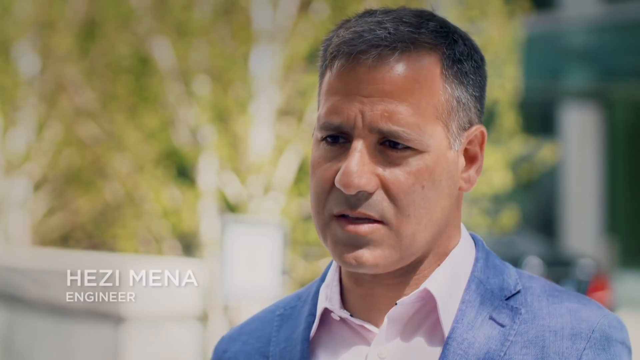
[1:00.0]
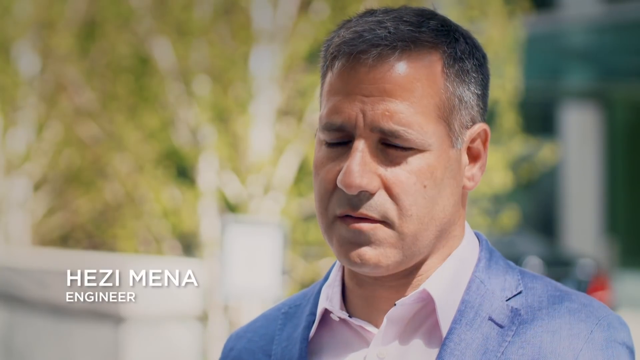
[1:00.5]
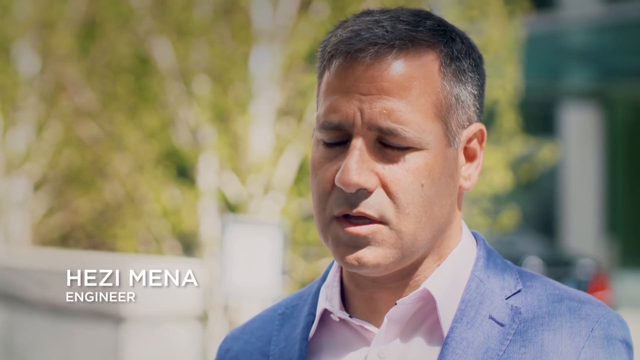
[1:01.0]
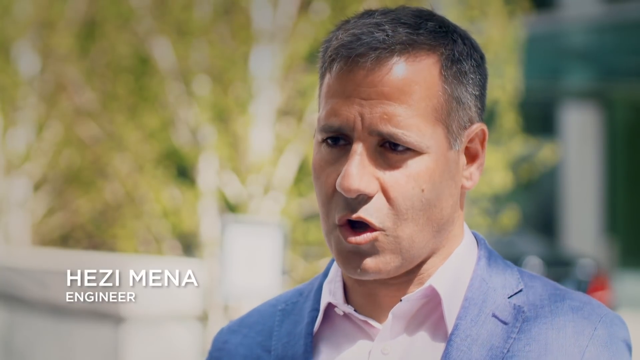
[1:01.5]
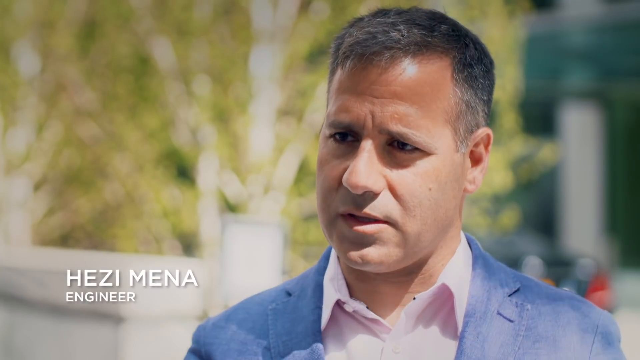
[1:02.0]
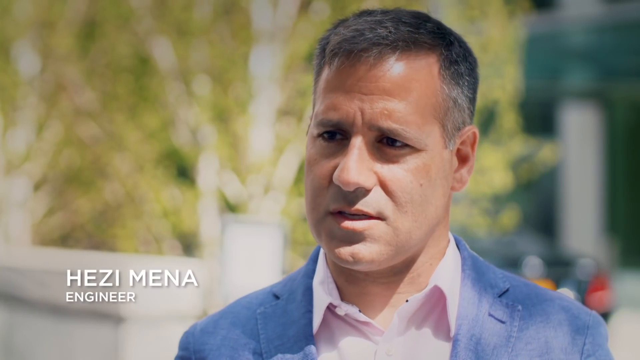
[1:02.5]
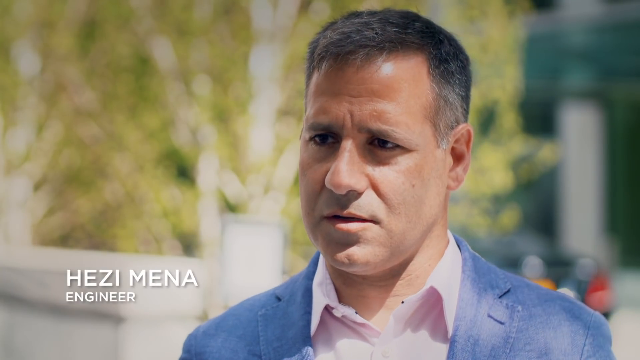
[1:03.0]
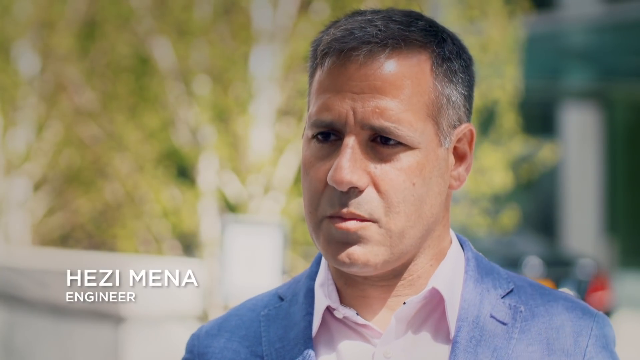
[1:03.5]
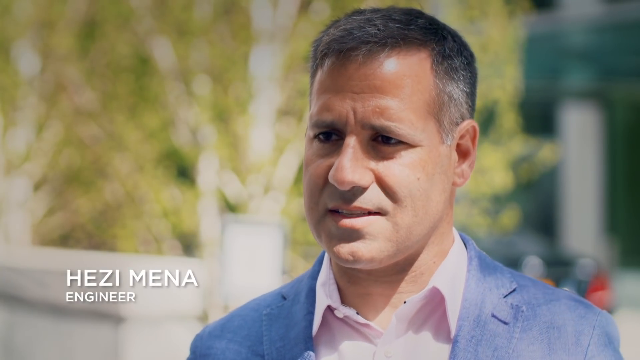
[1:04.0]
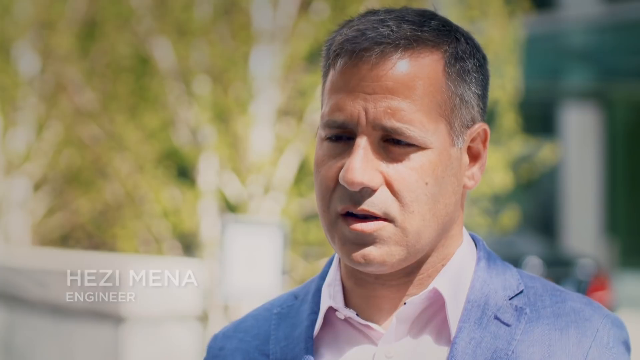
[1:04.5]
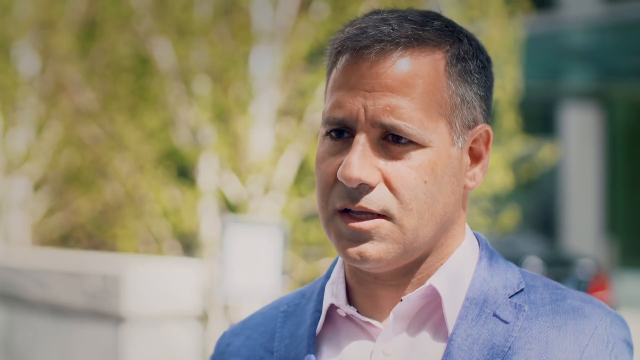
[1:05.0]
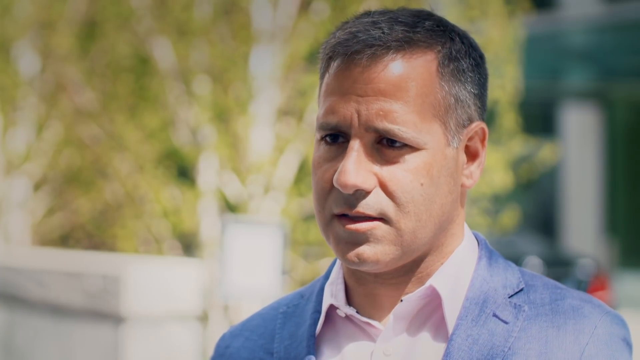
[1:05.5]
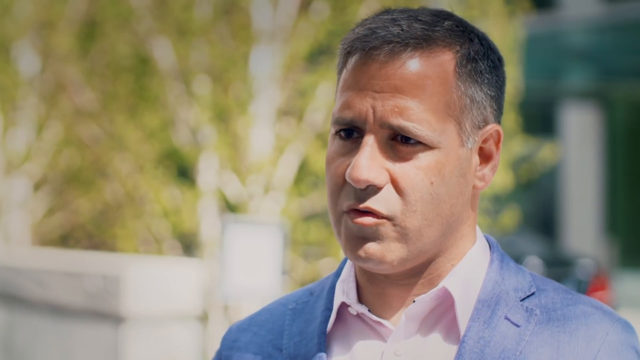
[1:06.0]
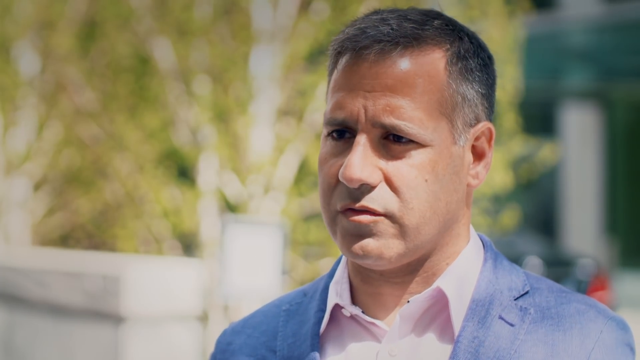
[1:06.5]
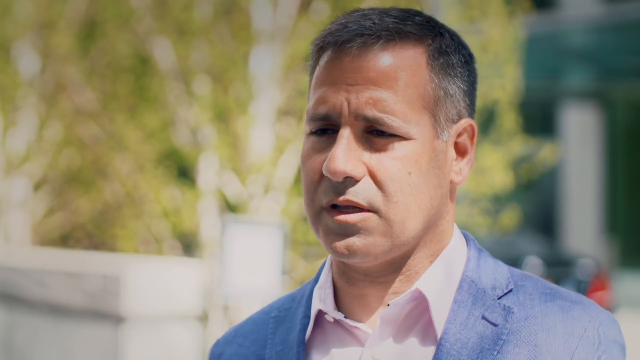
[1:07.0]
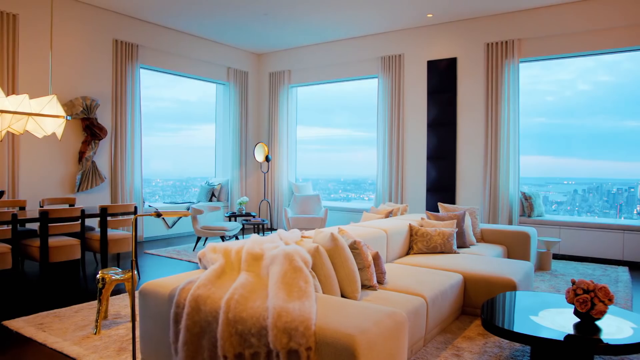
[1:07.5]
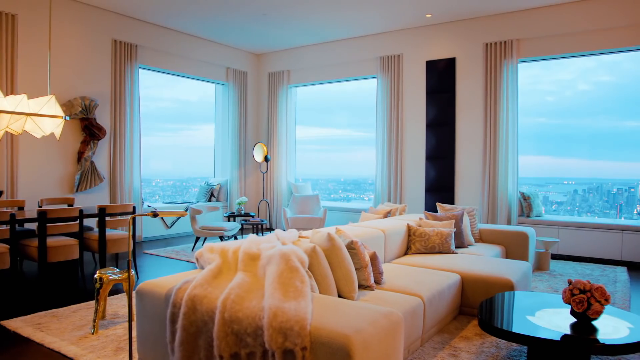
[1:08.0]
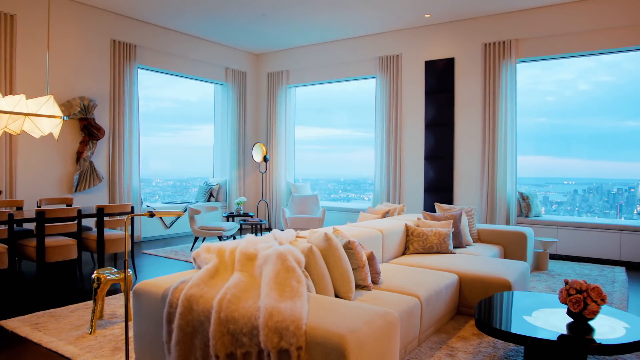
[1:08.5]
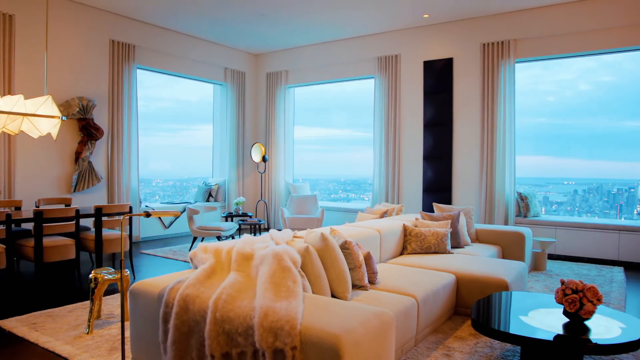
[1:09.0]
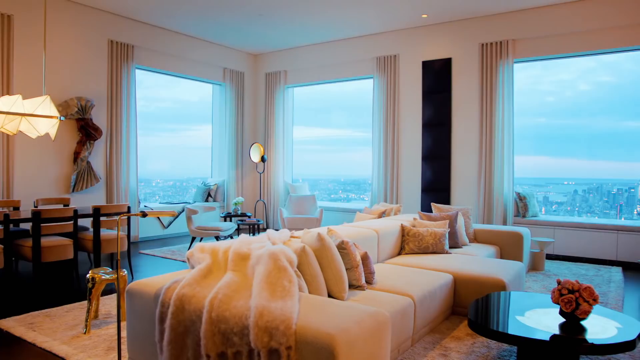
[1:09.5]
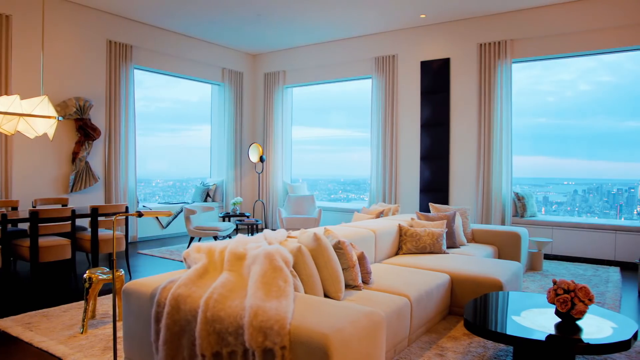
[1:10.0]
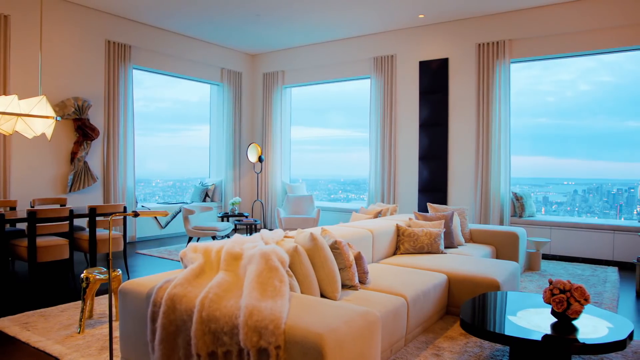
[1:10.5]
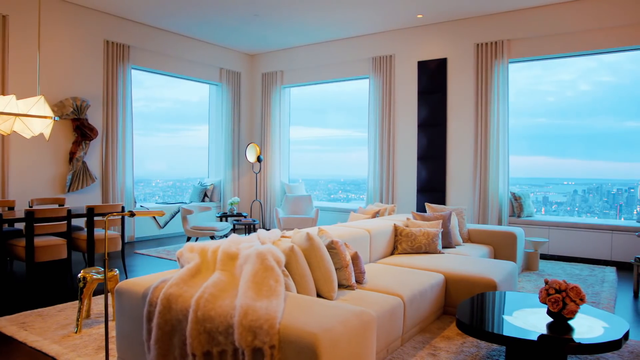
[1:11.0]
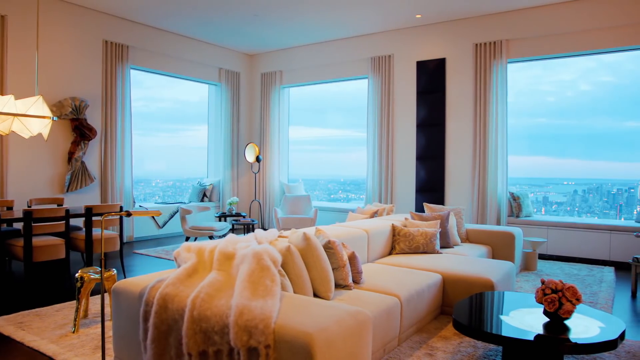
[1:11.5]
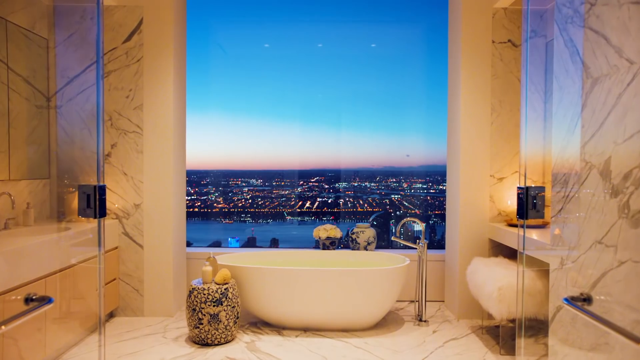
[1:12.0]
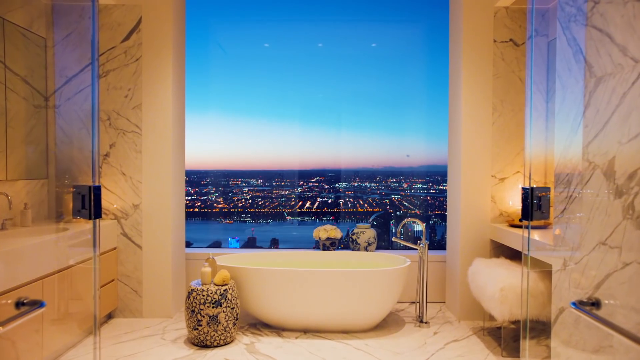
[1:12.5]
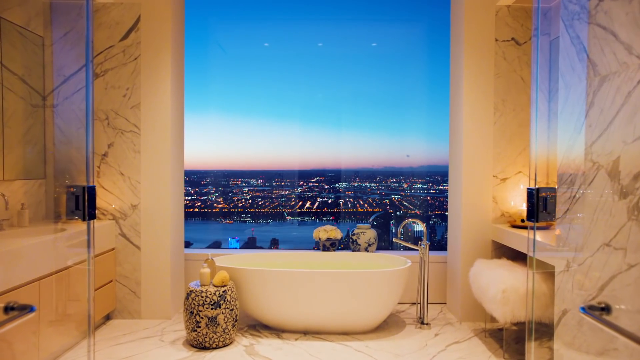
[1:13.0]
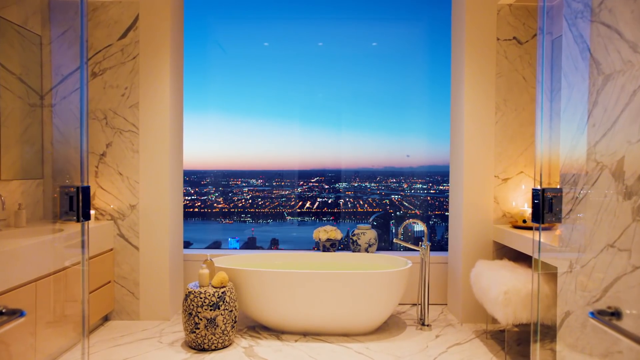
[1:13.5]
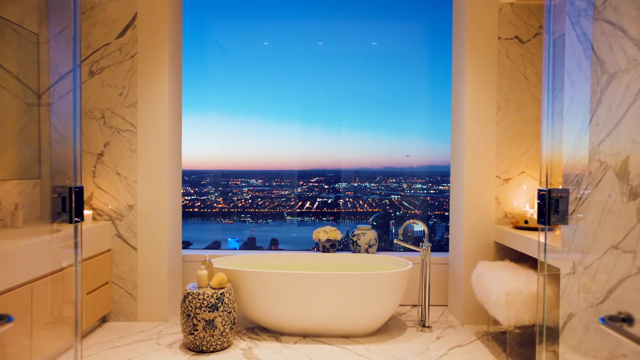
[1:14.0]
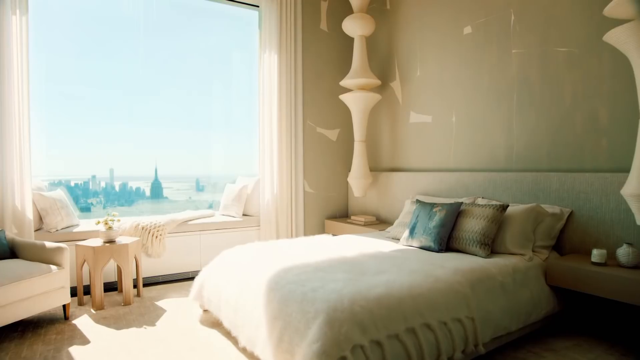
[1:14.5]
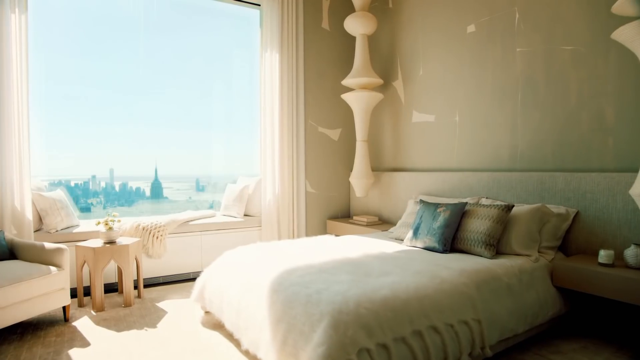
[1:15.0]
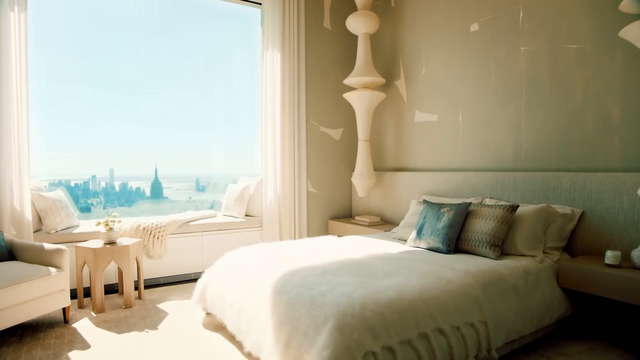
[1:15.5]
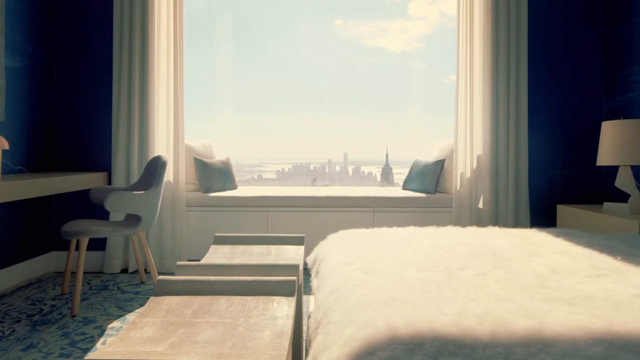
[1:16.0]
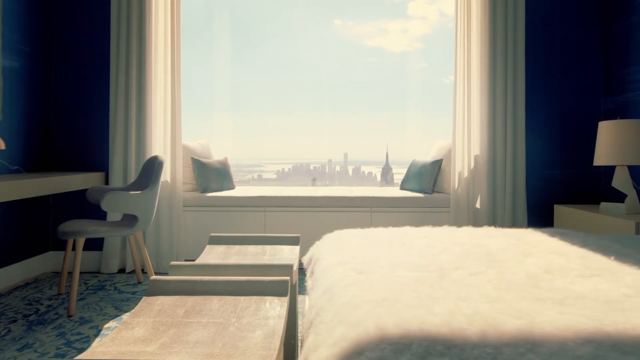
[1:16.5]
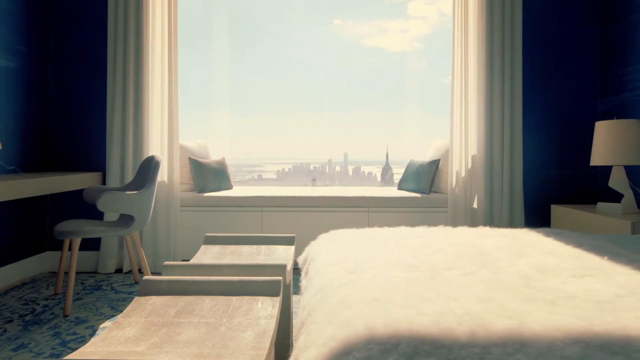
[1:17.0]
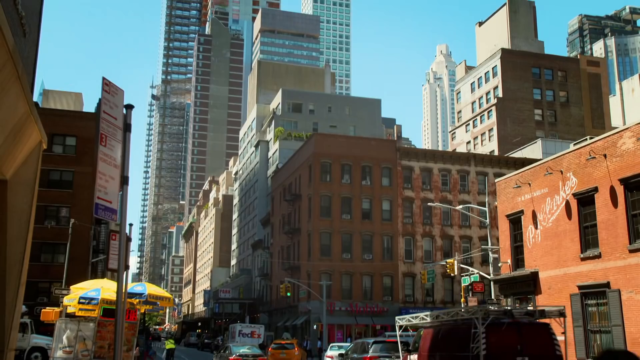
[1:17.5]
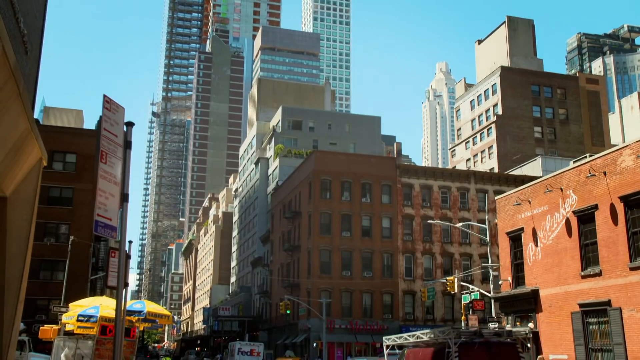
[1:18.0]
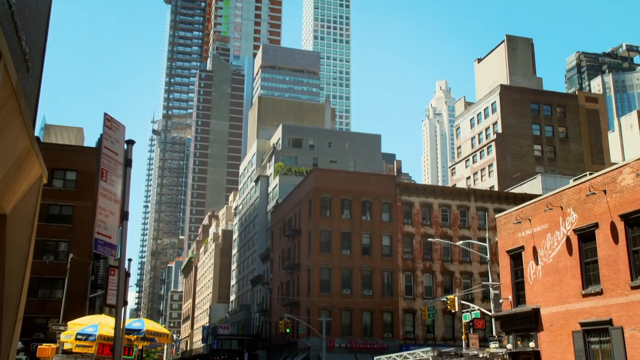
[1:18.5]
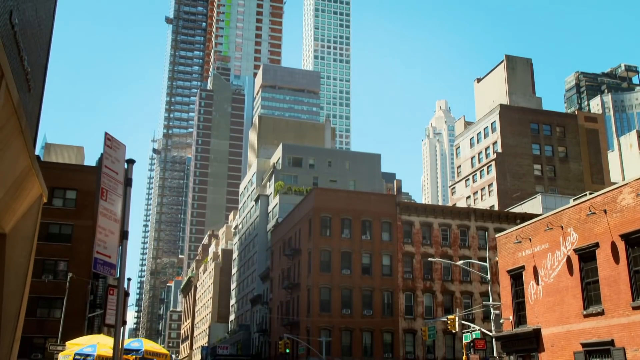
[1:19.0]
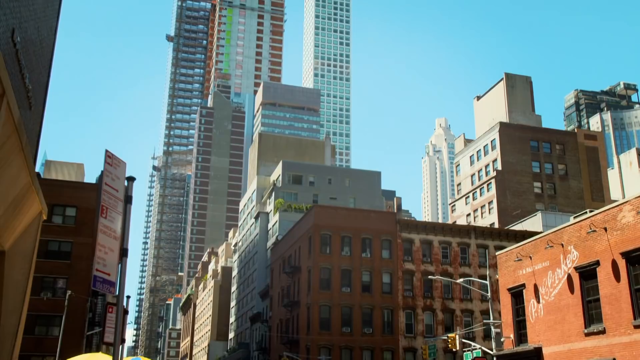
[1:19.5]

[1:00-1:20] A man who is possibly in his 40s or early 50s has very short salt-and-pepper hair and is clean-shaven. He wears a white collared shirt with a dusty blue jacket over it and is seen only from the chest up. The background is blurred green and white, possibly trees, though it looks like it might be a city landscape. White words to his left give his name, "HEZI" and then "MENA", with "ENGINEER" in capital letters underneath. It looks like an interview. Next comes the inside of what looks like an apartment, probably in a skyscraper, since the view out of the large windows seems very high up. Then a bathroom appears, with the tub in front of a giant window looking out on the city at nighttime. Finally, a street-level view pans up to a group of skyscrapers.